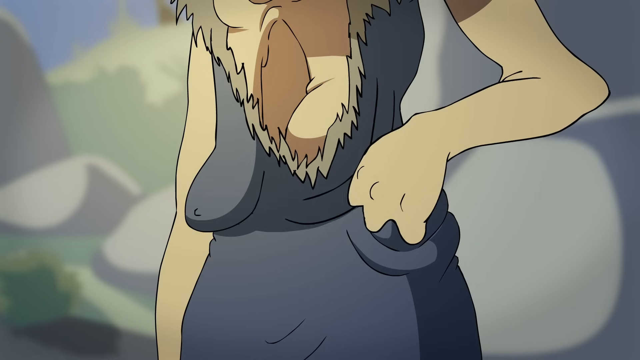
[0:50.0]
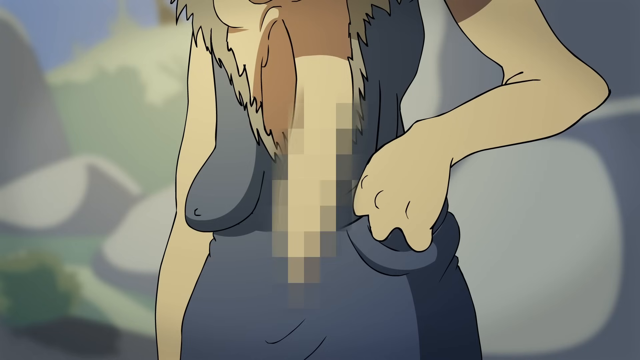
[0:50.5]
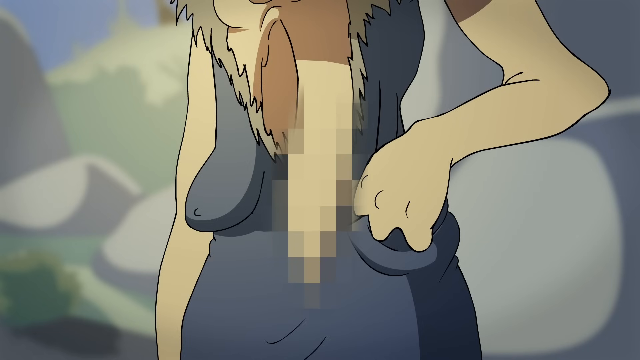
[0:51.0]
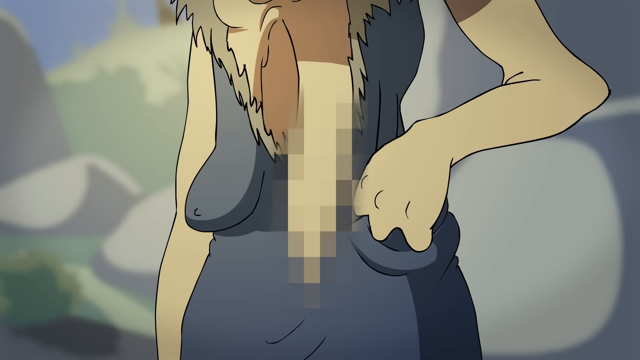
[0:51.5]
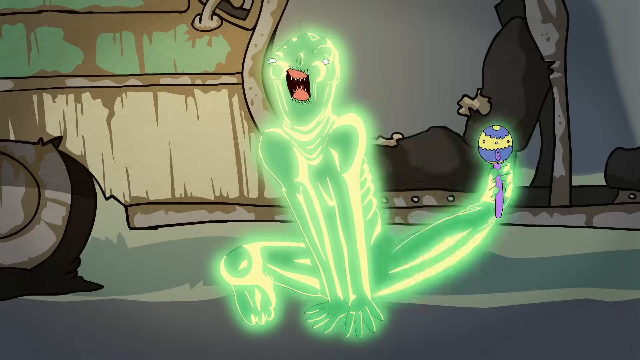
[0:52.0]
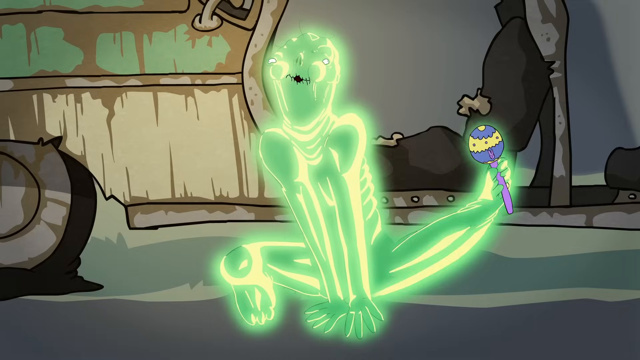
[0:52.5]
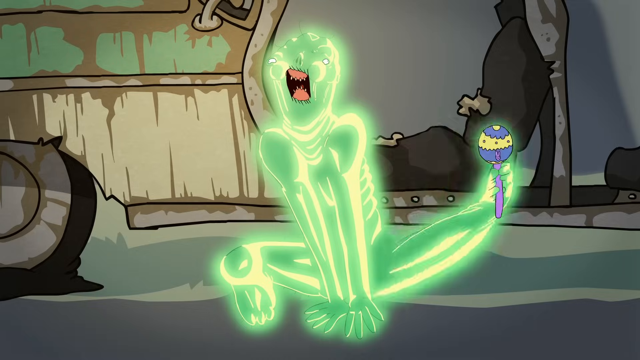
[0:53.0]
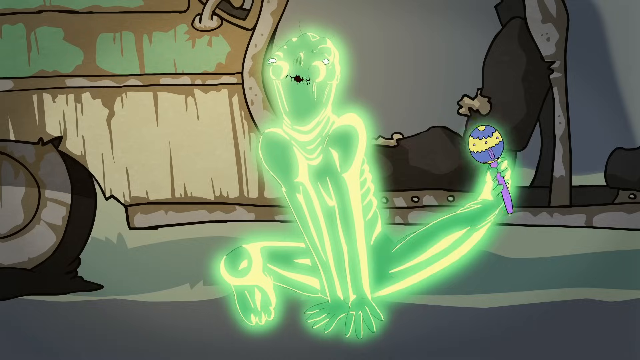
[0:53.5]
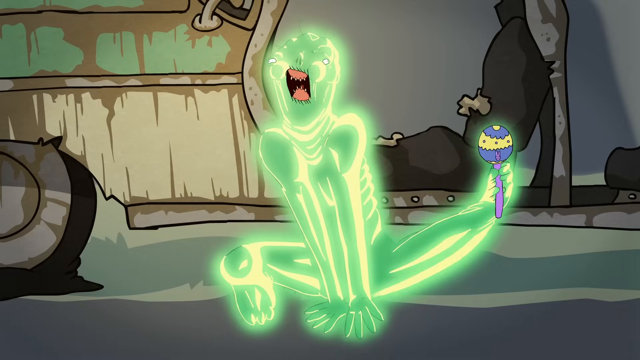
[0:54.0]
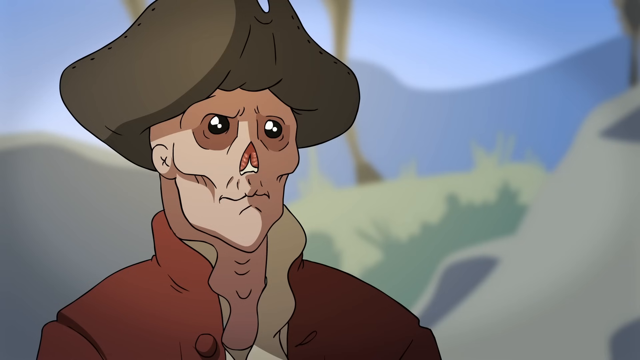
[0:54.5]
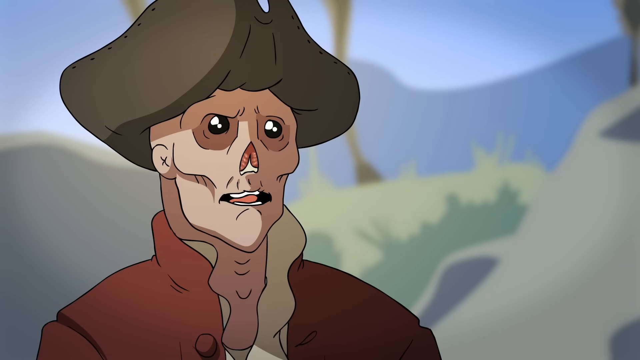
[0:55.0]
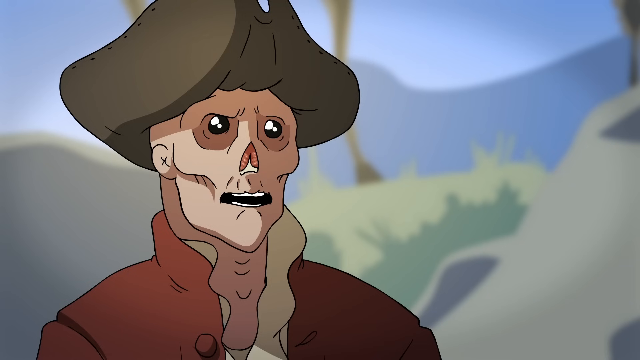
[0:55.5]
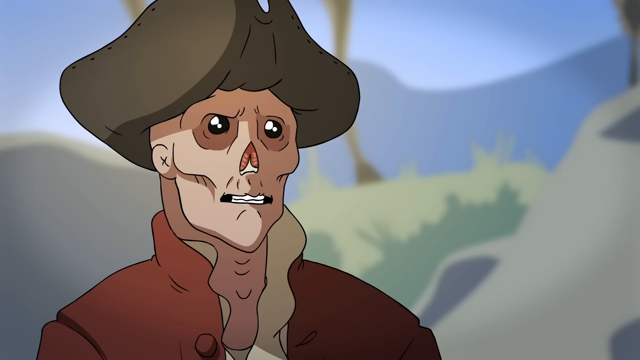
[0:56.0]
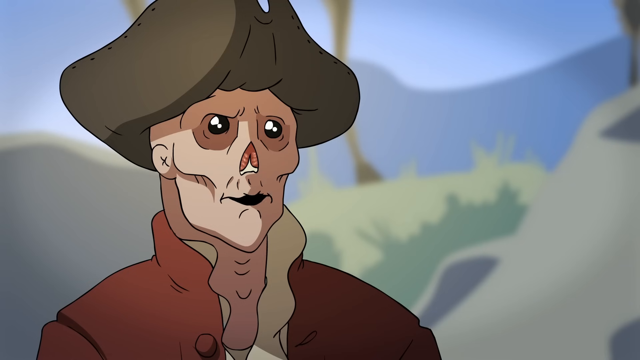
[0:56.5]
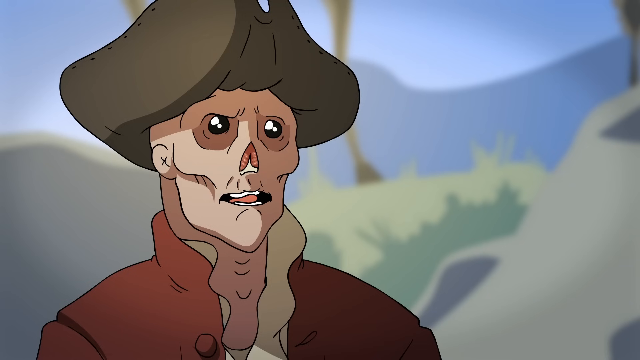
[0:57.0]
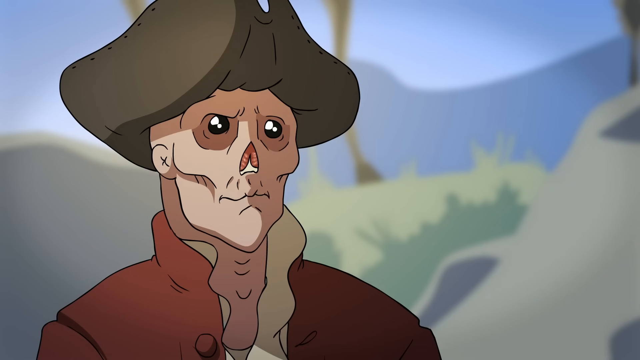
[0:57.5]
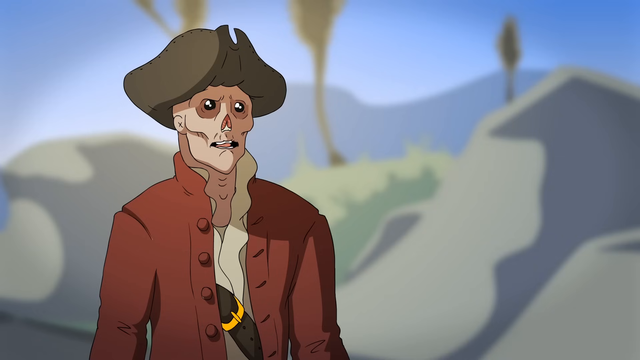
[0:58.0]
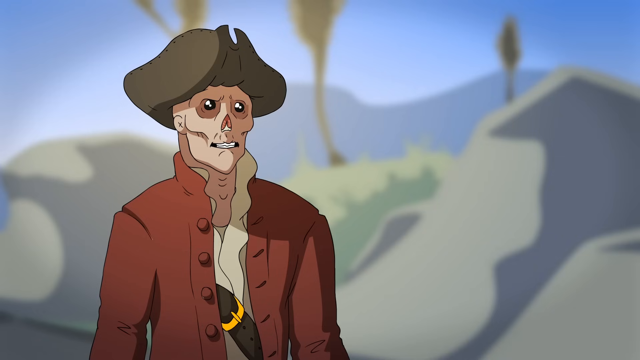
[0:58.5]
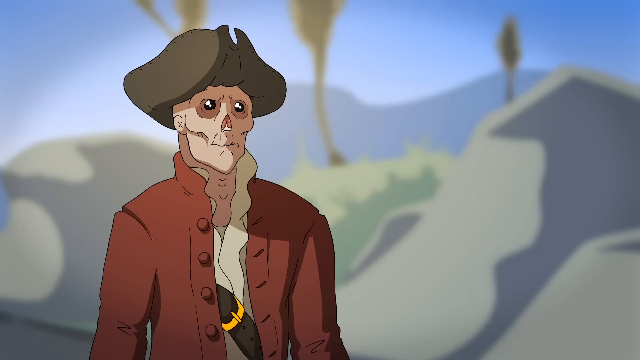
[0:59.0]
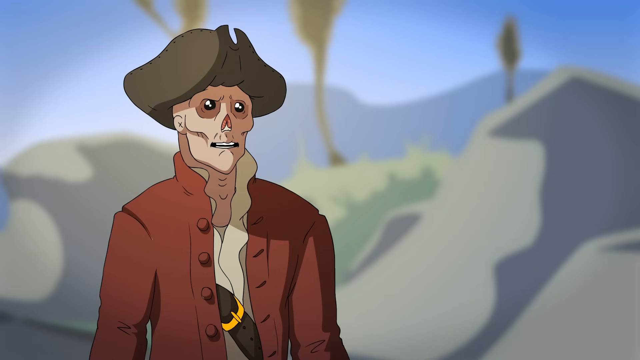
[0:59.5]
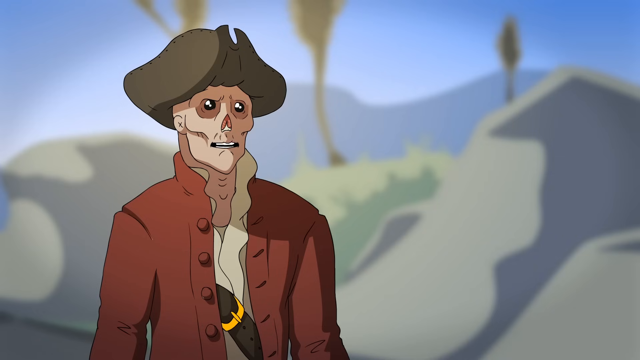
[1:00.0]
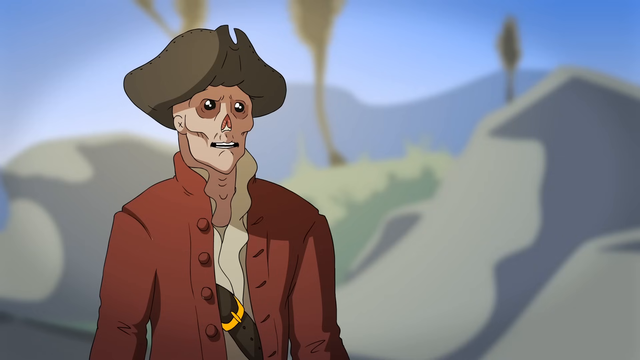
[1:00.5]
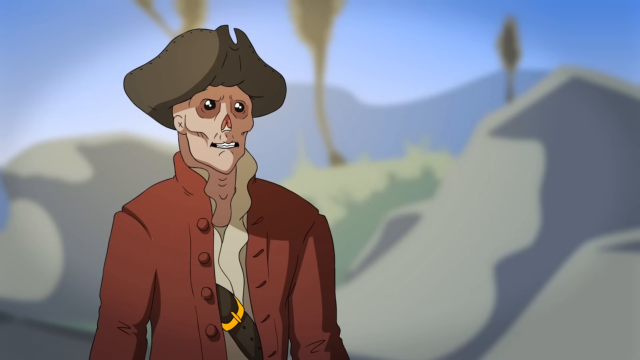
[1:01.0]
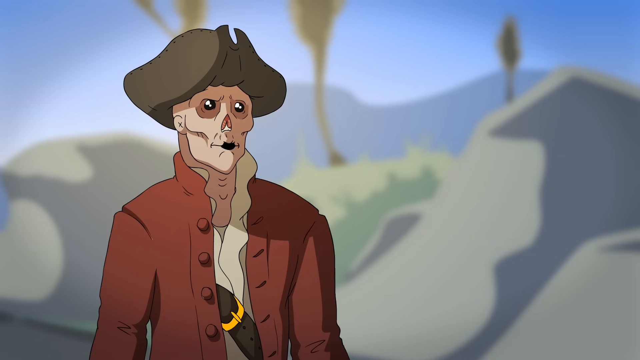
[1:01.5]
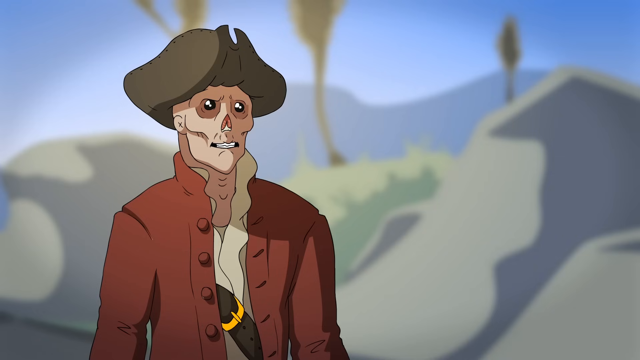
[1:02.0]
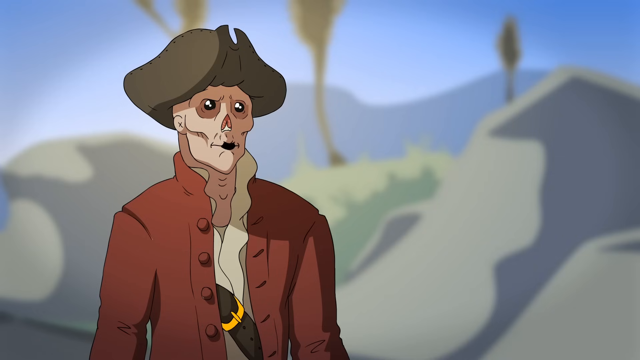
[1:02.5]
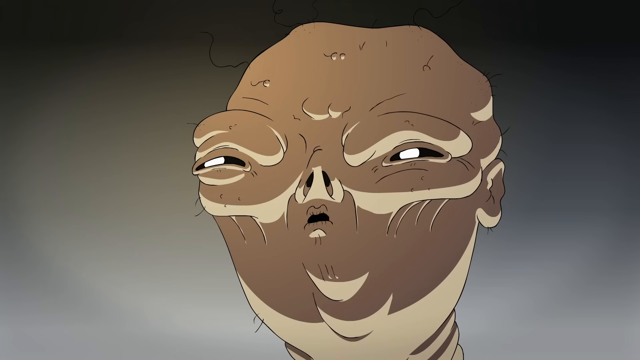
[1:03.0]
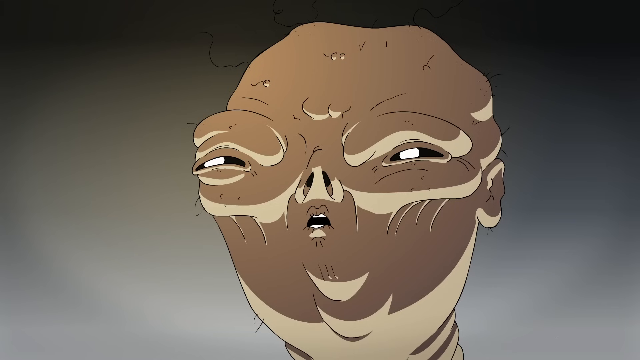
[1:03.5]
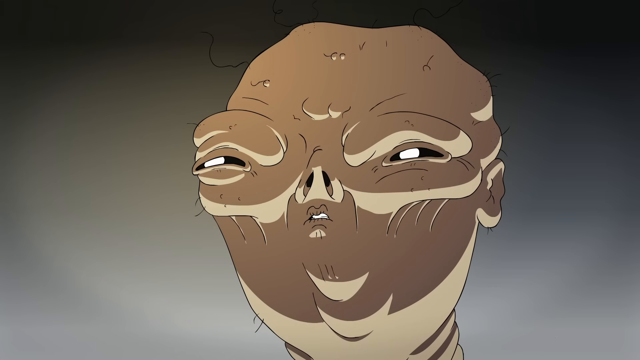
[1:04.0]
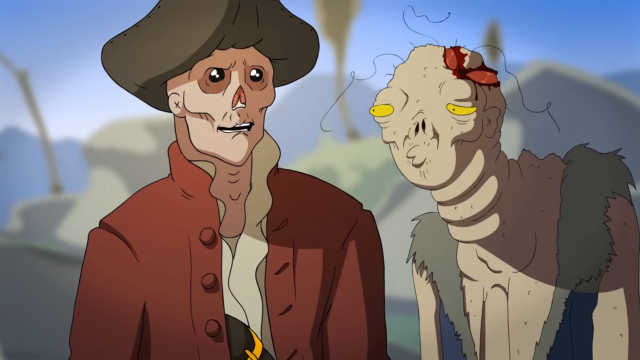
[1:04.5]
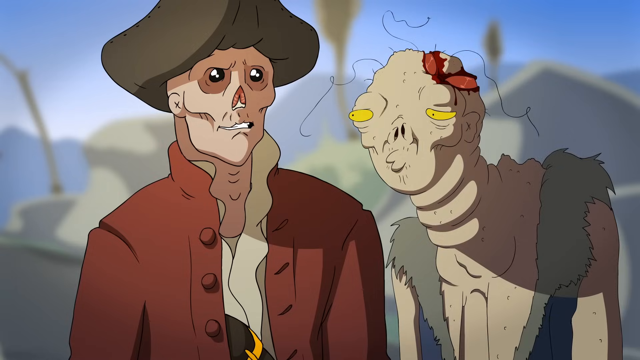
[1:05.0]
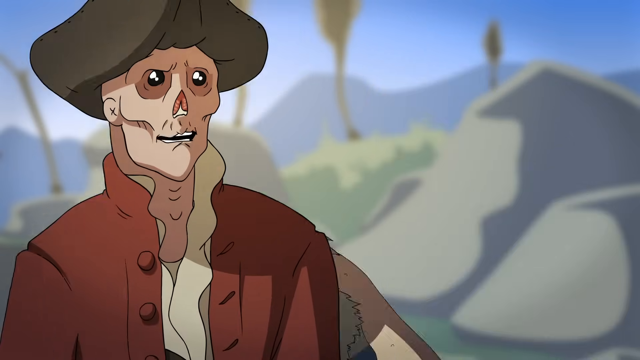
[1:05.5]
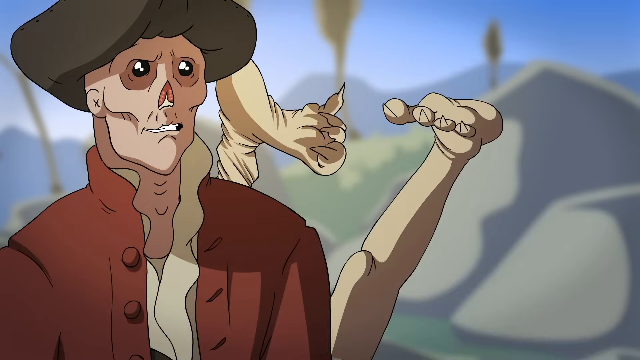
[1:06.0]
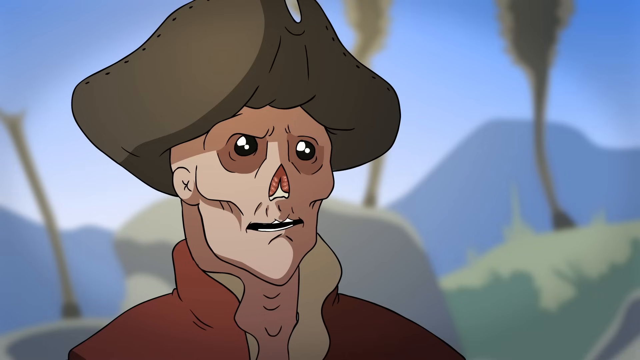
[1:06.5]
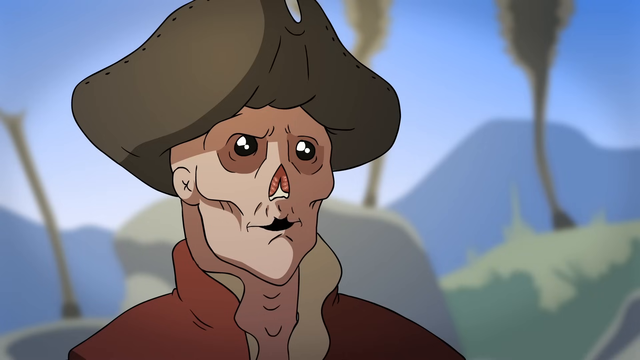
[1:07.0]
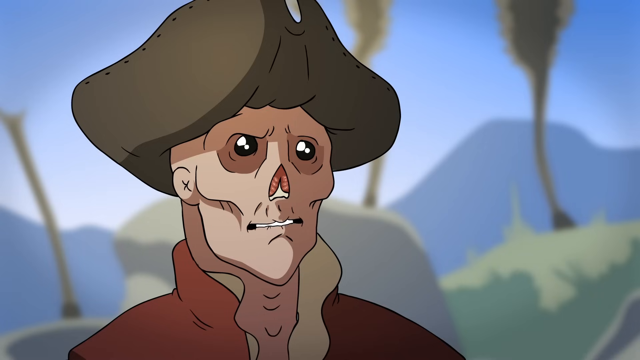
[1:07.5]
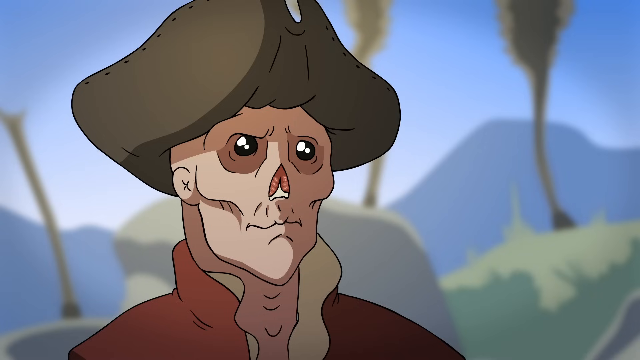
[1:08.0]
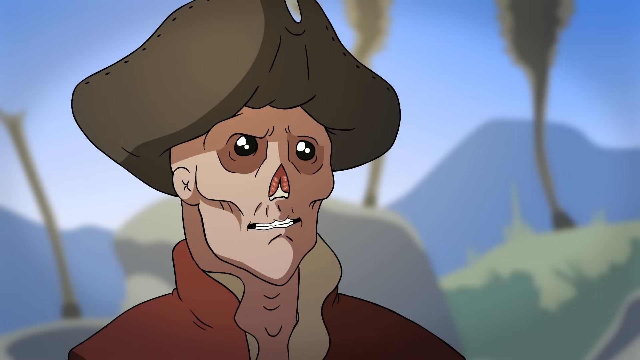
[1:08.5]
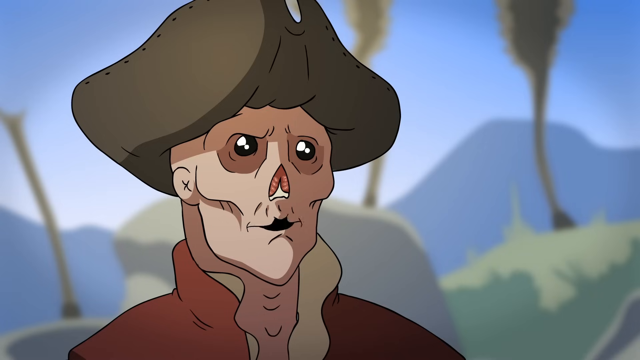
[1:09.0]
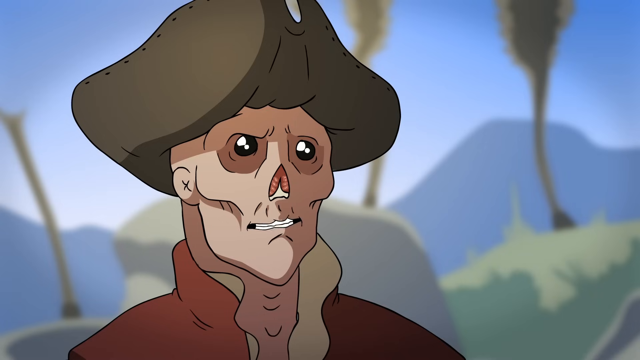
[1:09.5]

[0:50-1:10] The zombie woman in the dress pulls her dress down with her left hand, and her left breast pops out and is blurred out. The glowing green zombie creature sits on the ground, holding a rattle in its left leg and shaking it back and forth. The pirate man with no nose talks from the left of the frame; his eyes are solid black, including the irises, pupils and even the whites. The view zooms out a little, revealing a belt under his coat that runs diagonally across his chest from one shoulder down to his hip, and more of the trees in the background; there look to be three trees, blurred out. A close-up shows one of the zombie creatures speaking, with a very tiny mouth and squinted eyes. The woman in the dress approaches the man, then falls over on the ground, and both her feet kick up into the air.